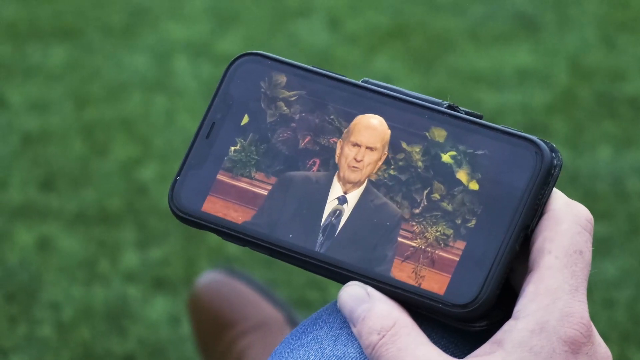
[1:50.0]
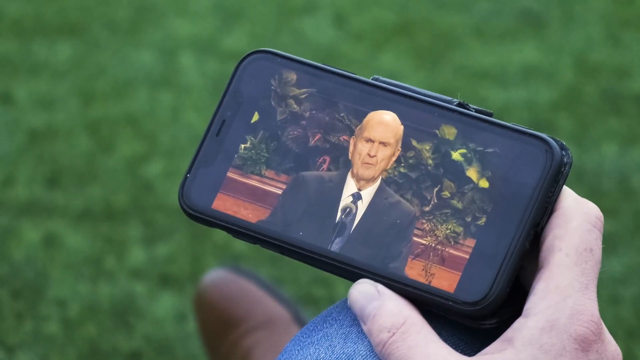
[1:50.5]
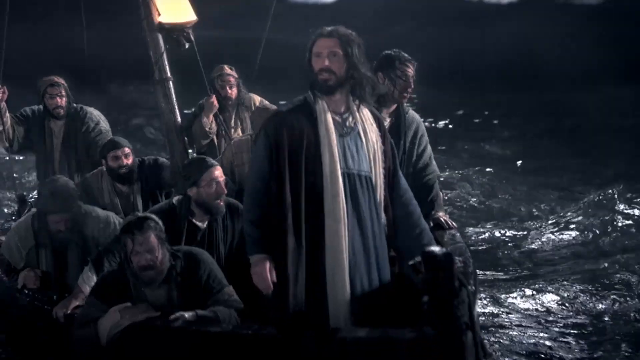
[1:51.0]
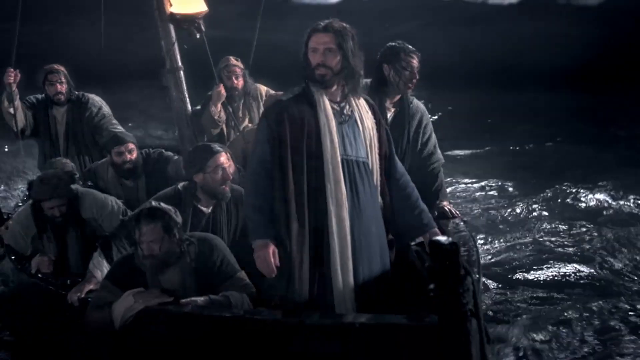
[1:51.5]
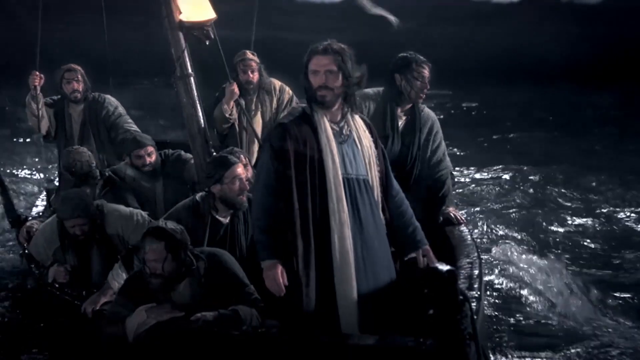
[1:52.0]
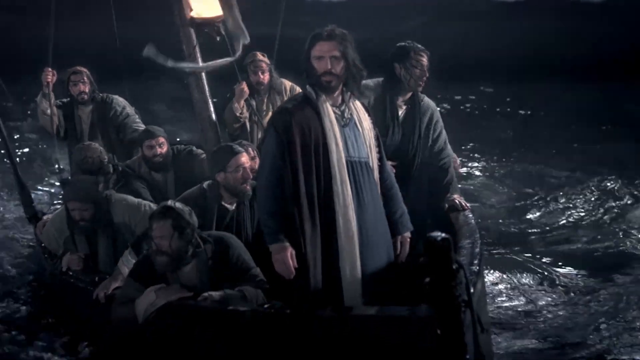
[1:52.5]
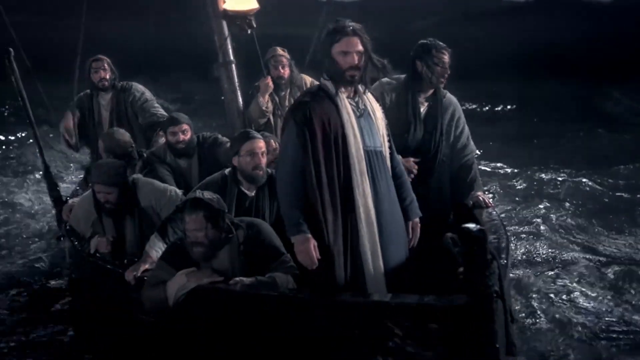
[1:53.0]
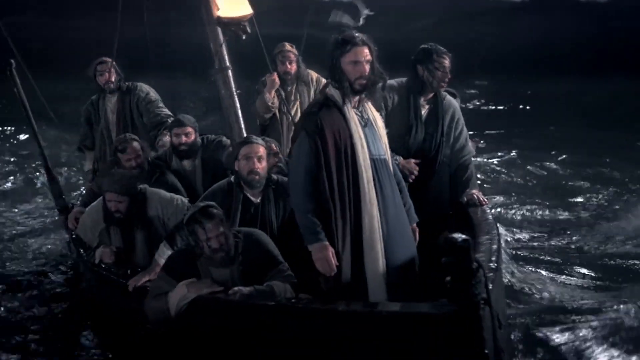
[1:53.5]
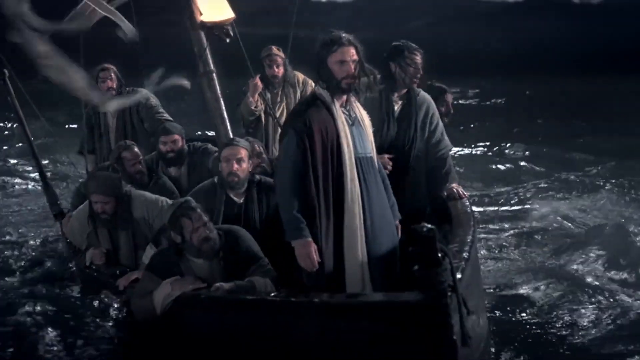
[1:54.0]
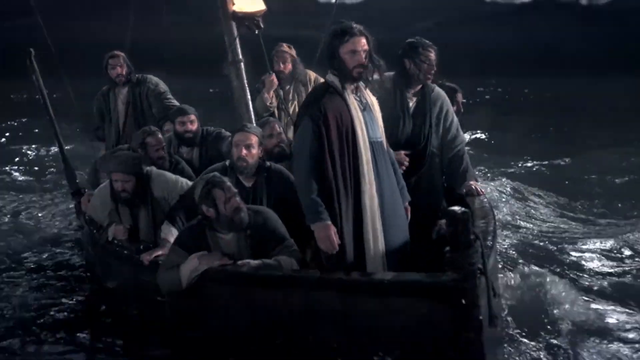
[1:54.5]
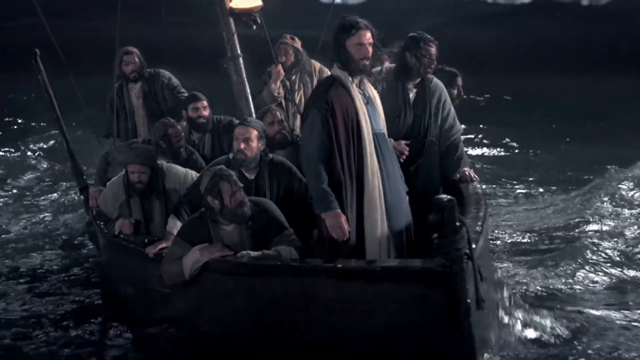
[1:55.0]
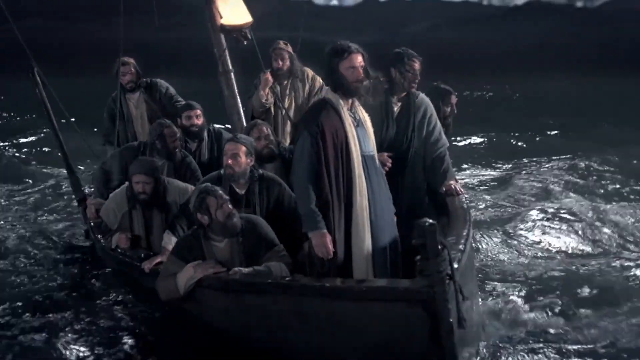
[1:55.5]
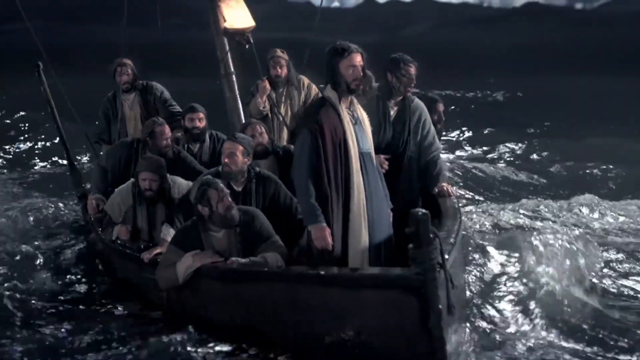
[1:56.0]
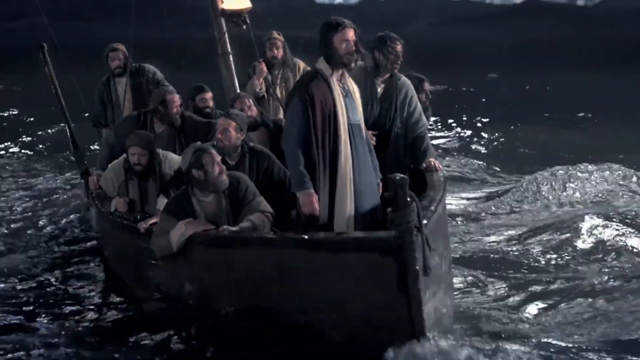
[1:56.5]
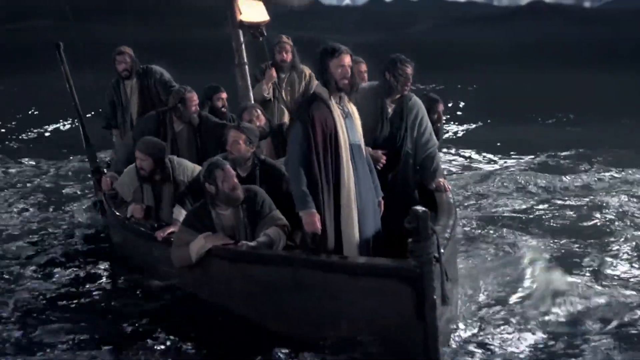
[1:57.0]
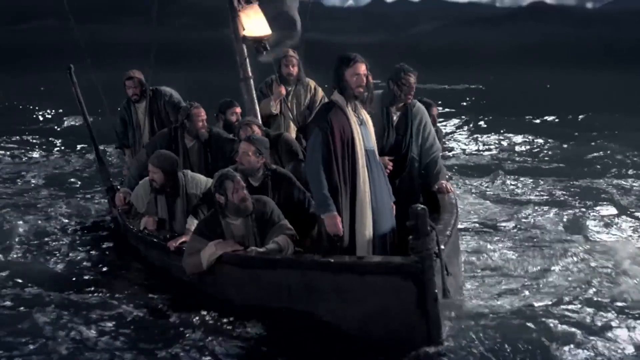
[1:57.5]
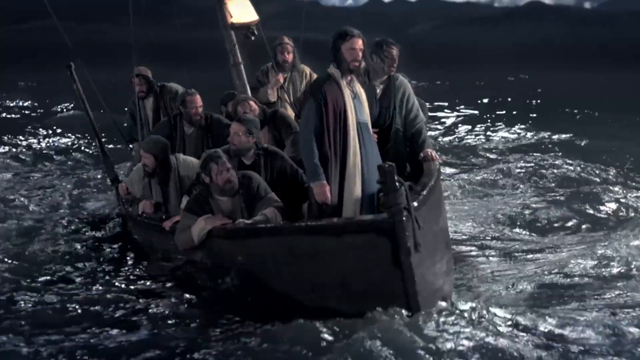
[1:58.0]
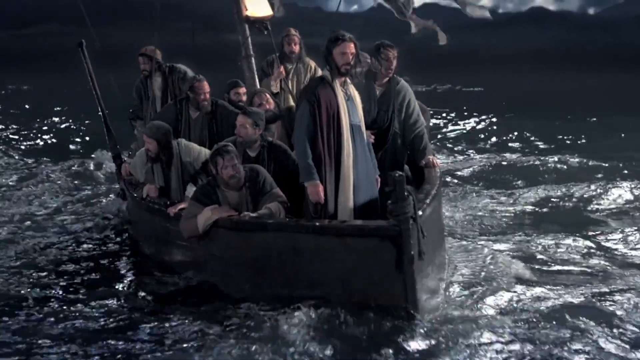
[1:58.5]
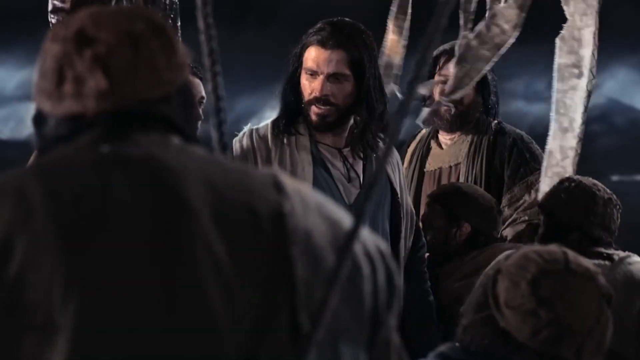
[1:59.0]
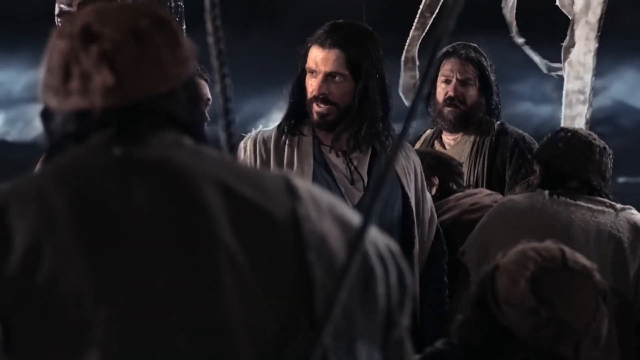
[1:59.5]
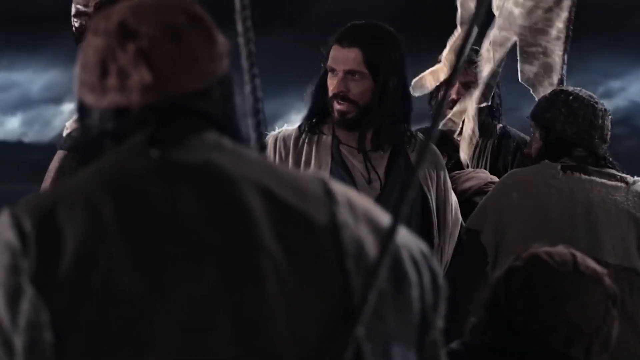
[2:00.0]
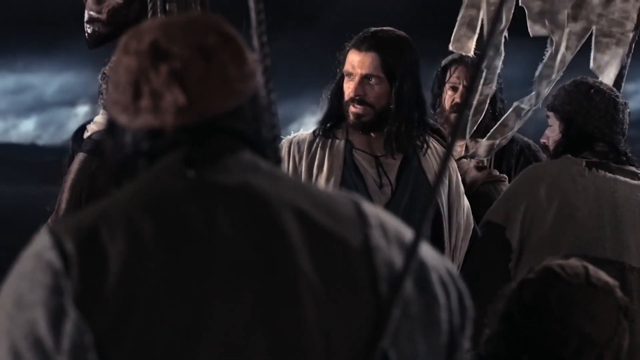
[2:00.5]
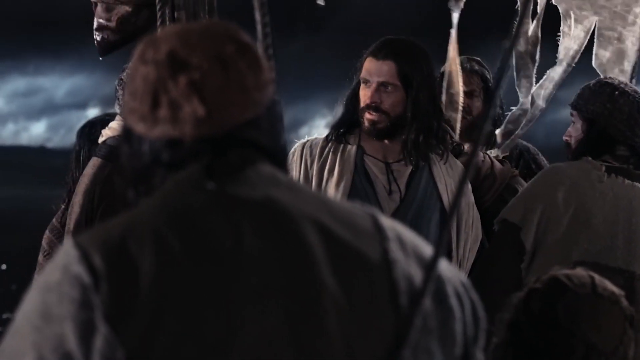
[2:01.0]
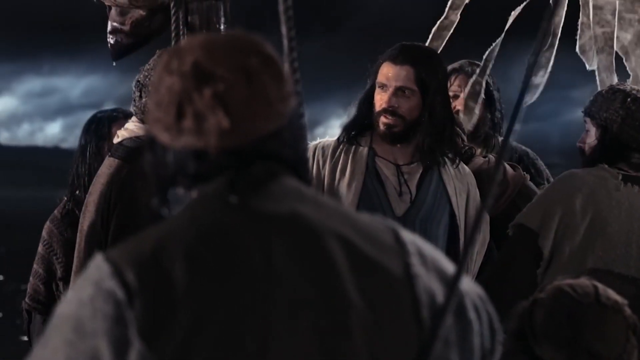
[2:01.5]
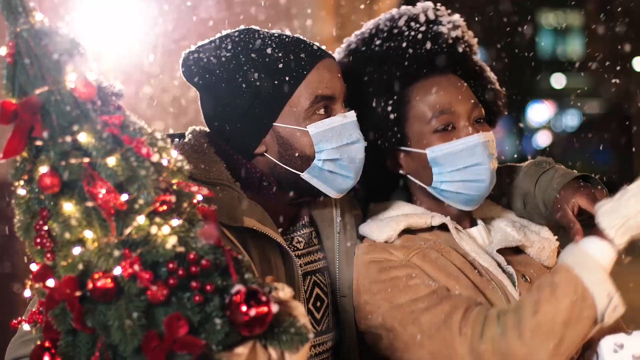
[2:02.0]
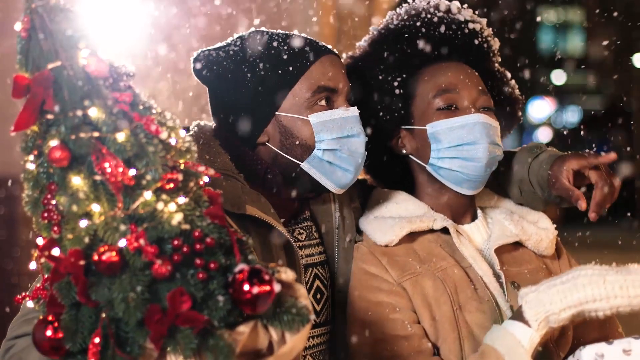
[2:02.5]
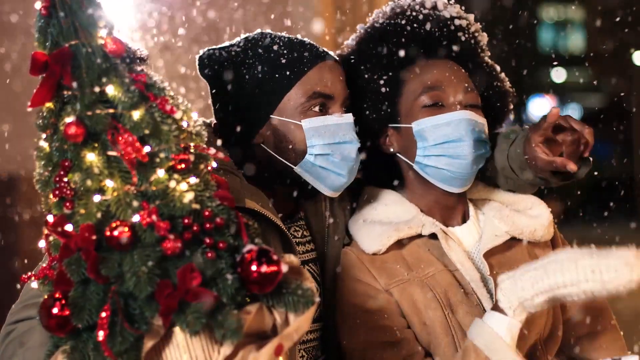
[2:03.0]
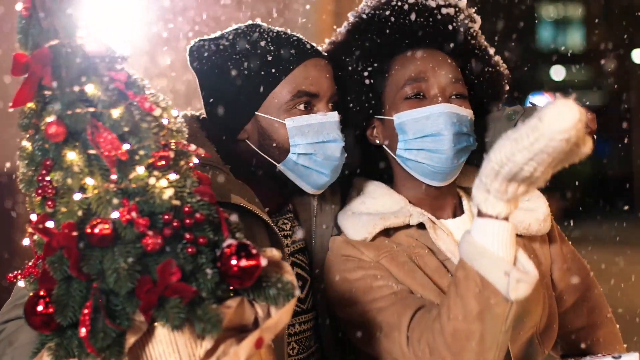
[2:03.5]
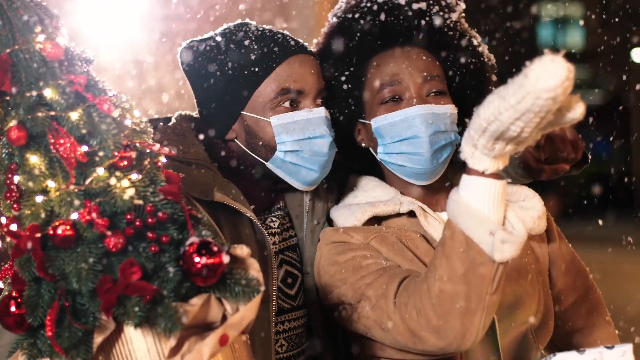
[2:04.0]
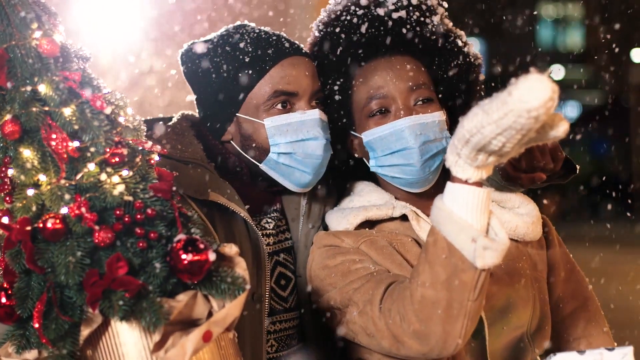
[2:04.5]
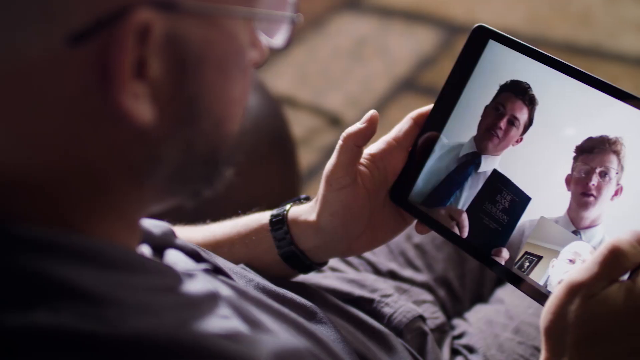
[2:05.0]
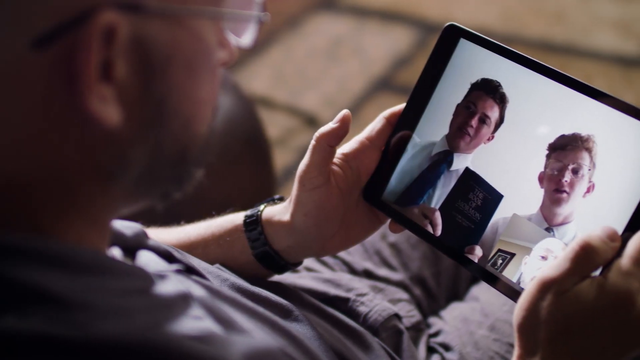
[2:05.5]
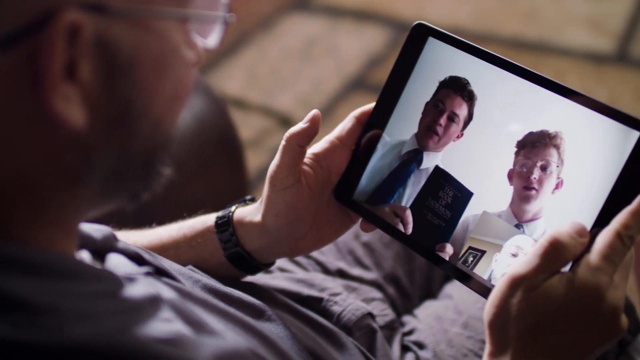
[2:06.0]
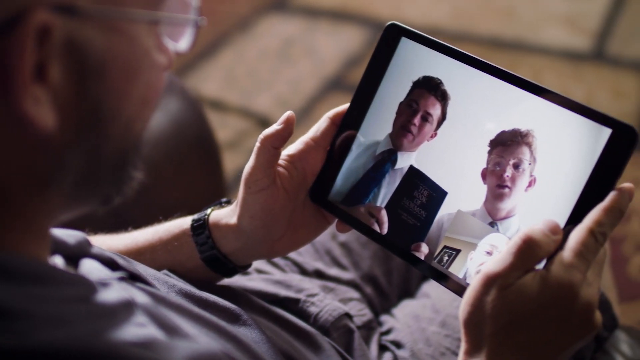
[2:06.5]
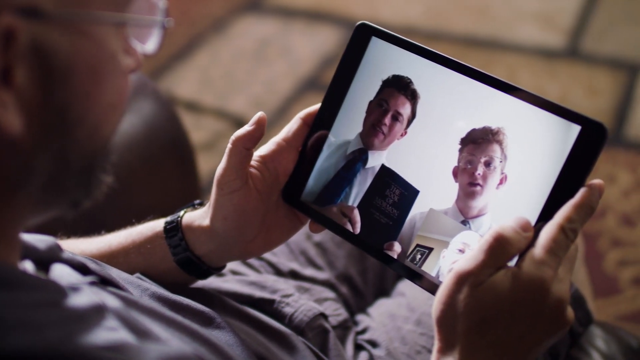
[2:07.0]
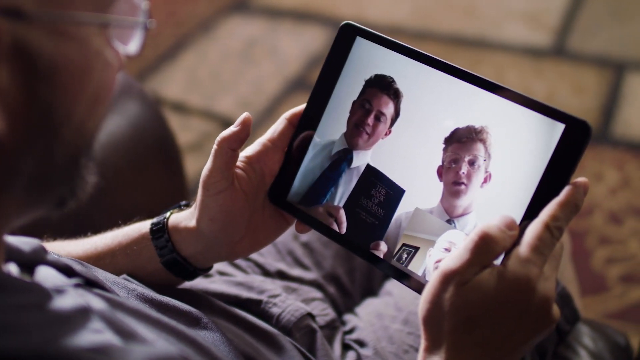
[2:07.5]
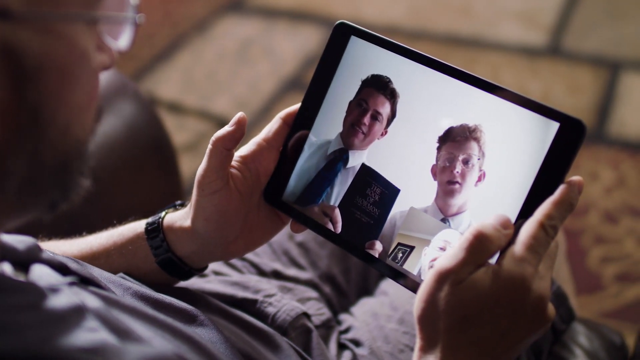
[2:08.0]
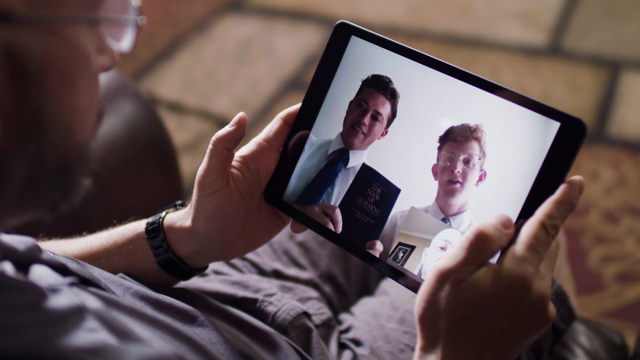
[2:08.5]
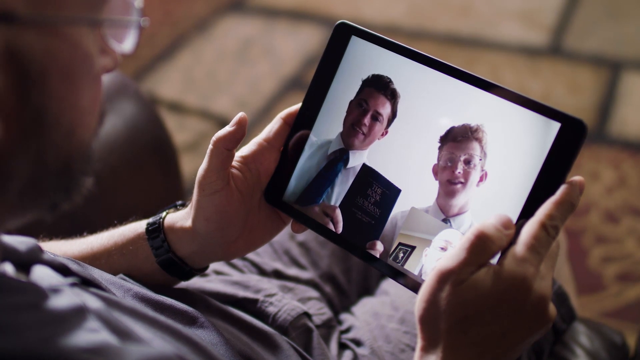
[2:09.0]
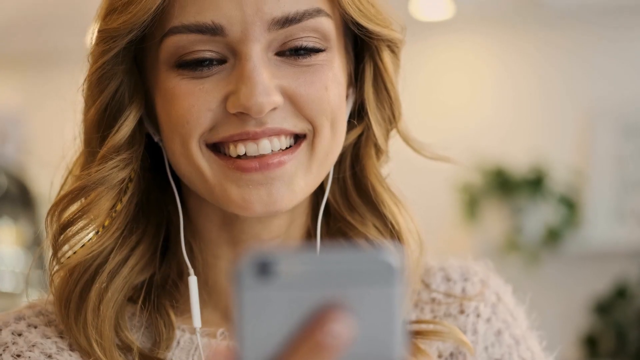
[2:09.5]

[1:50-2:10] The text "Voice of Dieter F. Uchtdorf, Quorum of the Twelve Apostles" appears, with images apparently from the COVID period. A man watches a video of a minister talking on his phone. A reenactment shows Jesus and the apostles in a boat, apparently the story in which Peter doubts that Jesus will save them; it looks like a sound stage, with very fake waves and a picture of waves in the background. A Black couple wears face masks; the man holds a very small decorated Christmas tree in his right hand, and the woman, wearing mittens, points at something. A man looks at a tablet showing two people who look like Mormons, in white shirts and ties, and it looks like he is talking to them. A woman with blonde hair, with earbuds wired to her phone, talks or smiles at someone.